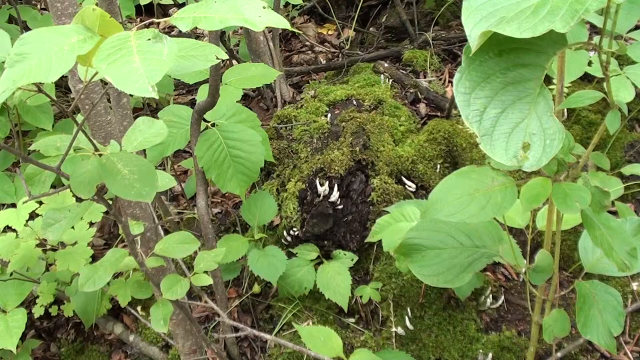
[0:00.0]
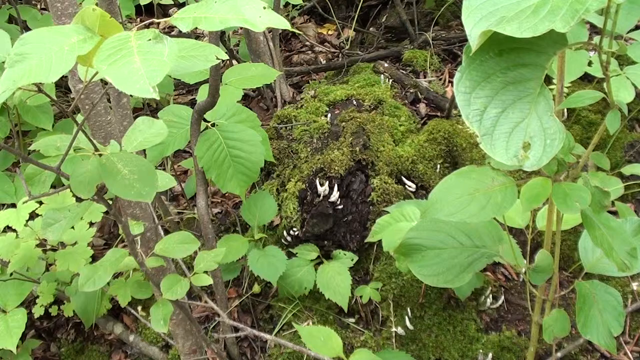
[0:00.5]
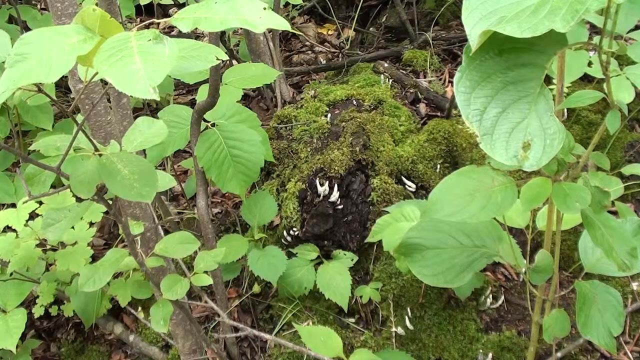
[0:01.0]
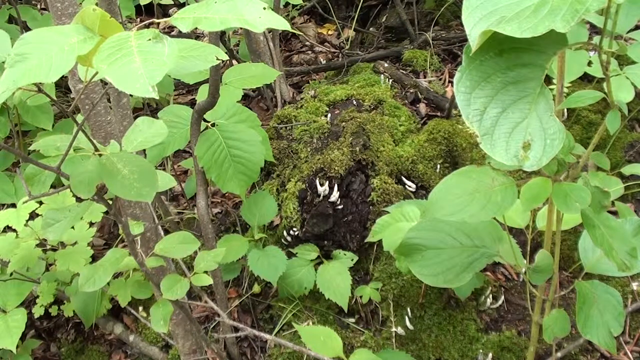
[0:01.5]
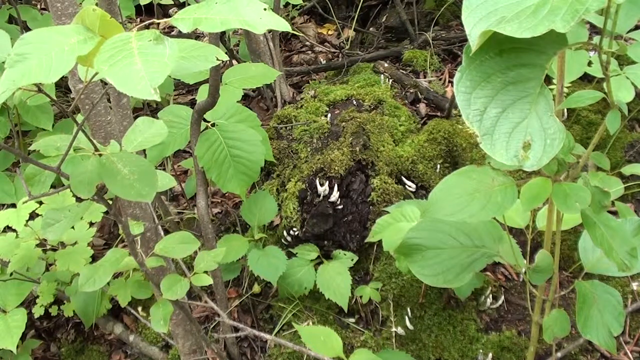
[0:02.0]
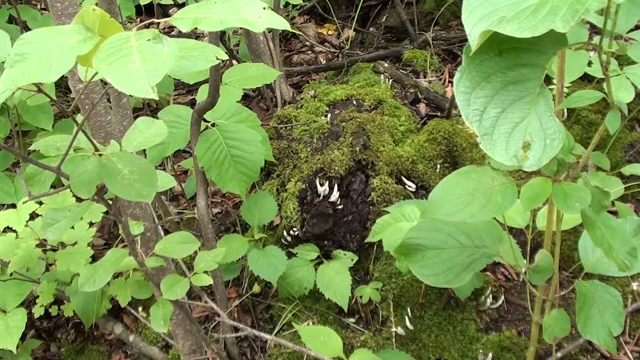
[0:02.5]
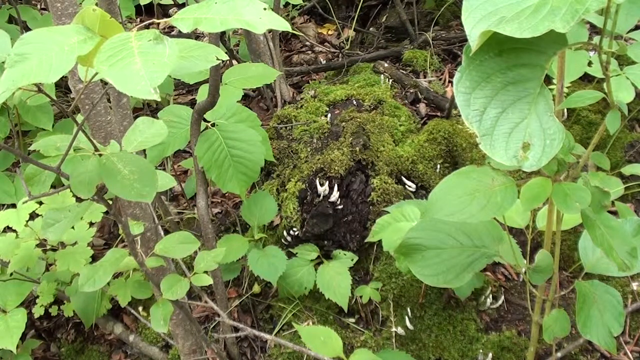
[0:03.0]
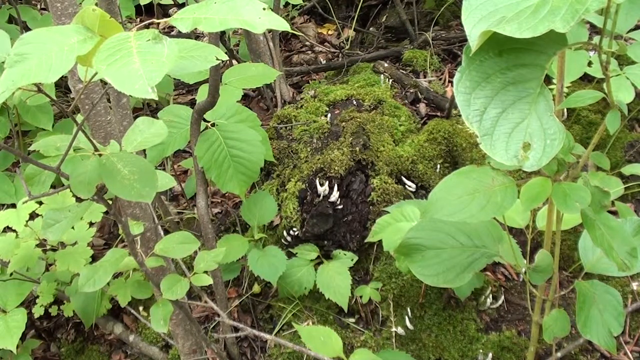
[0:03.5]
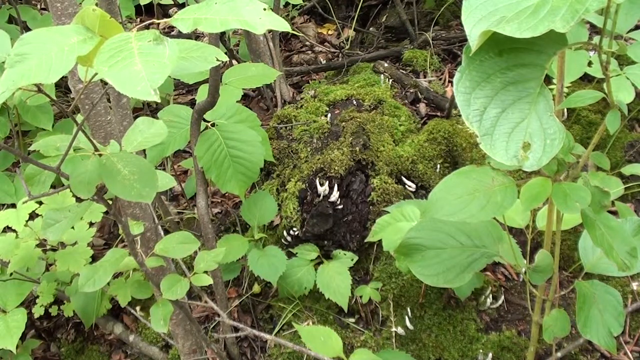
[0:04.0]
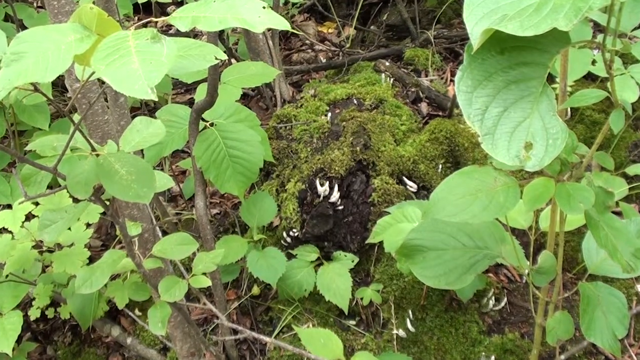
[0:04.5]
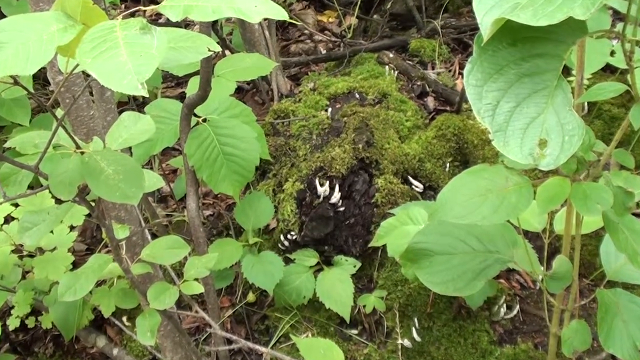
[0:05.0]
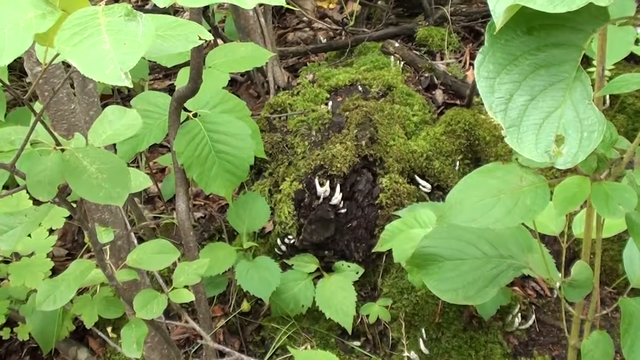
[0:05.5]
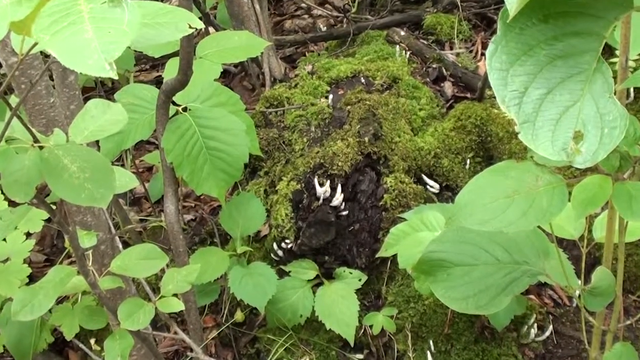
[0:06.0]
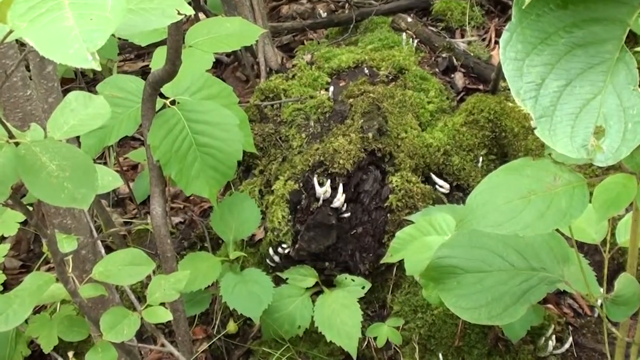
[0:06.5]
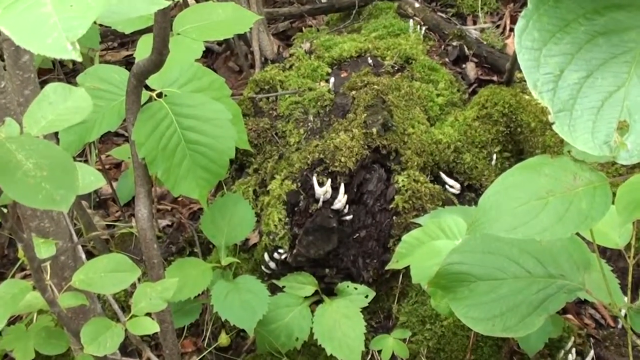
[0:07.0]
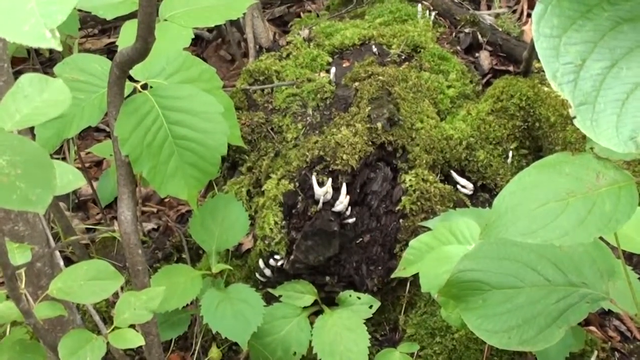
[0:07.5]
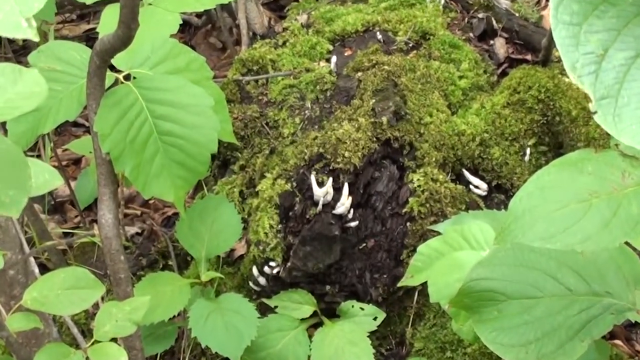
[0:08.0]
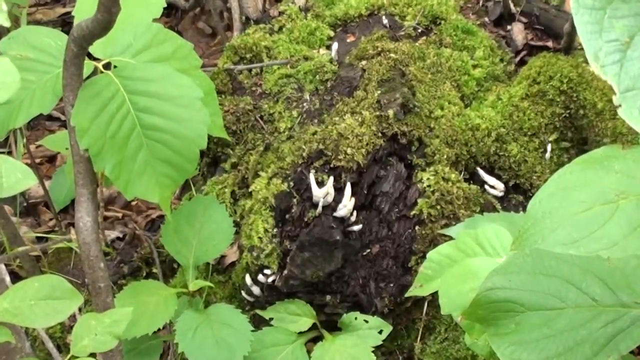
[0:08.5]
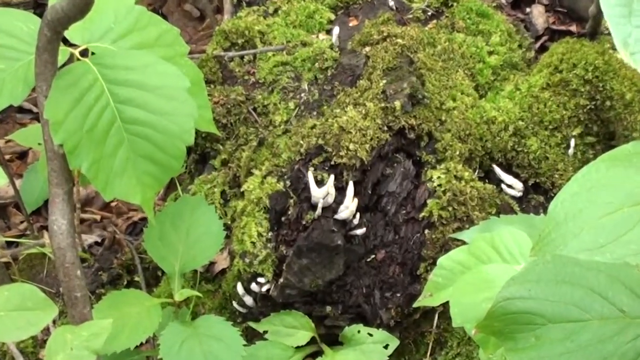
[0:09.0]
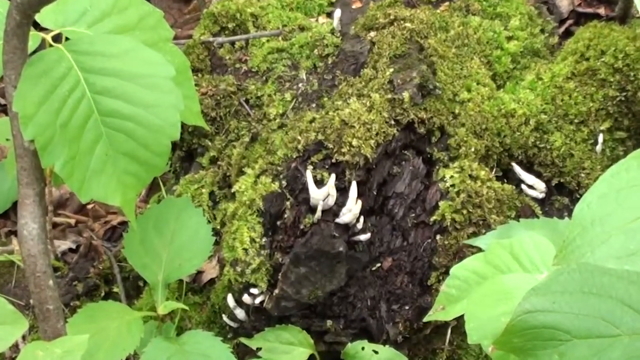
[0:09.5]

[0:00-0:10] The video appears to be recorded in the woods somewhere. Tall, skinny plants with big light green leaves are visible, along with some small trees. There is a mossy-looking area that might be a stump, and growing inside it are small white things that look like either fungus or the beginnings of mushrooms, though they might also be plants. They are small, white and pointy in shape, growing up out of the mossy log. Green moss covers the whole log, and these solid white things stick out of it.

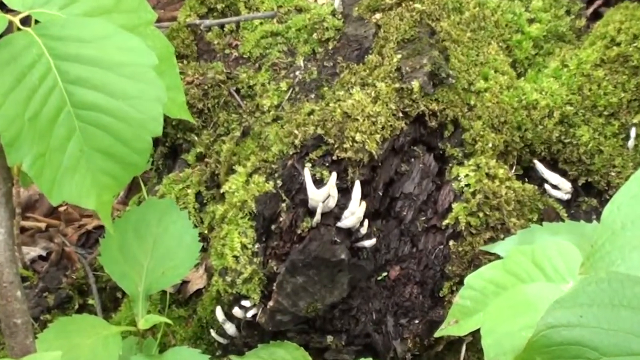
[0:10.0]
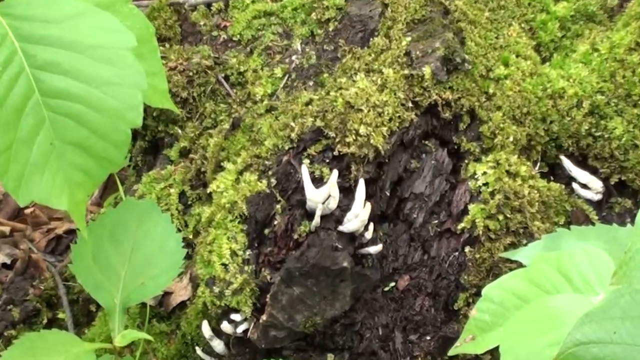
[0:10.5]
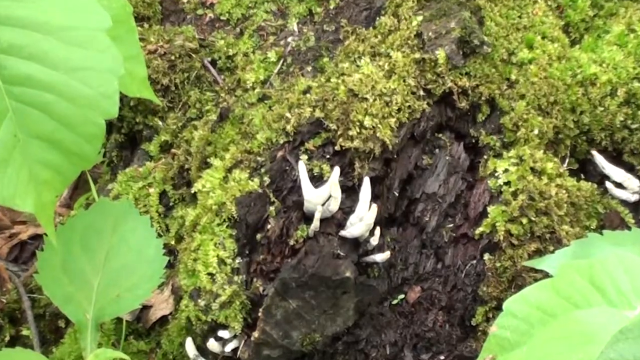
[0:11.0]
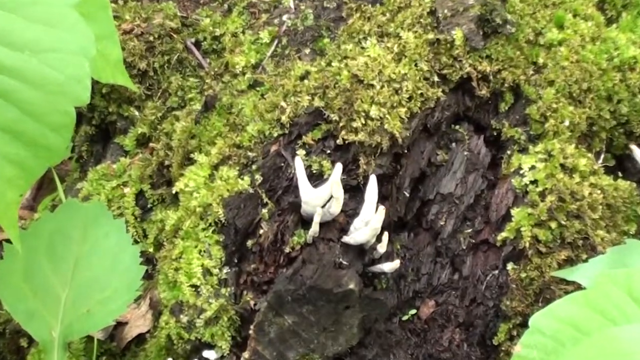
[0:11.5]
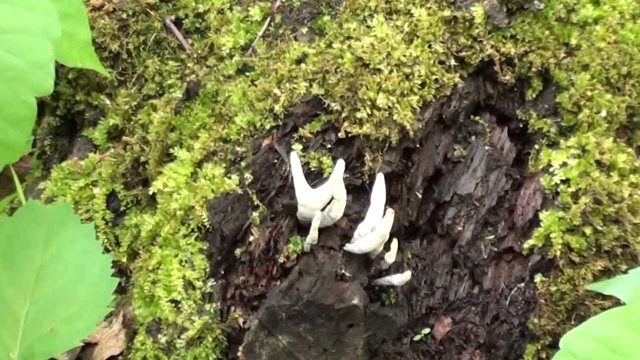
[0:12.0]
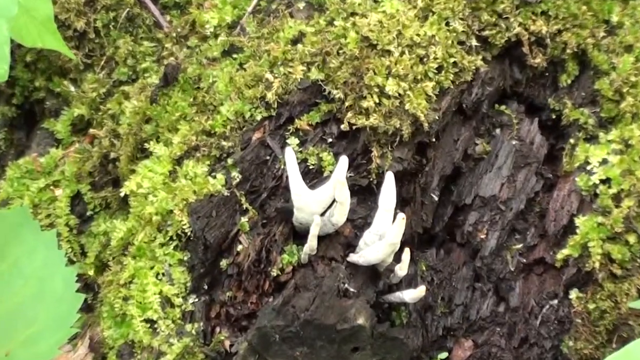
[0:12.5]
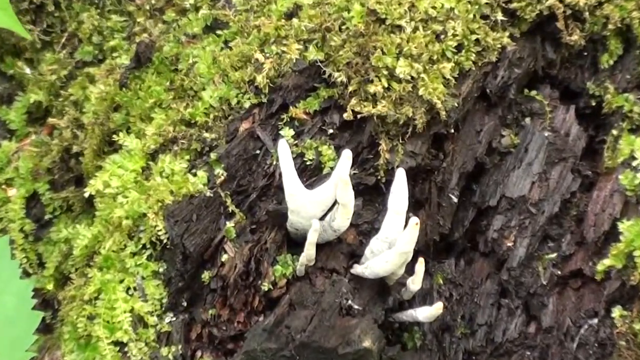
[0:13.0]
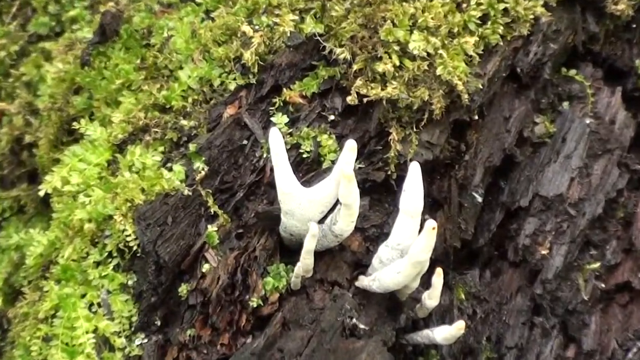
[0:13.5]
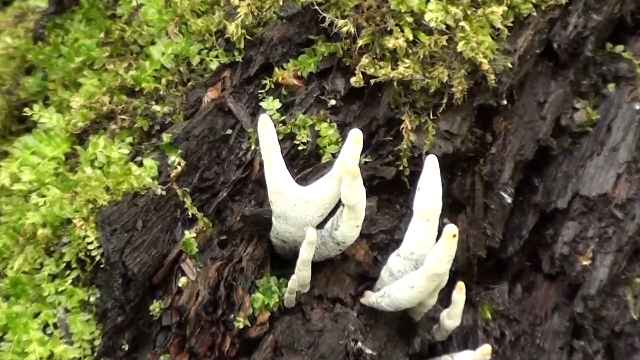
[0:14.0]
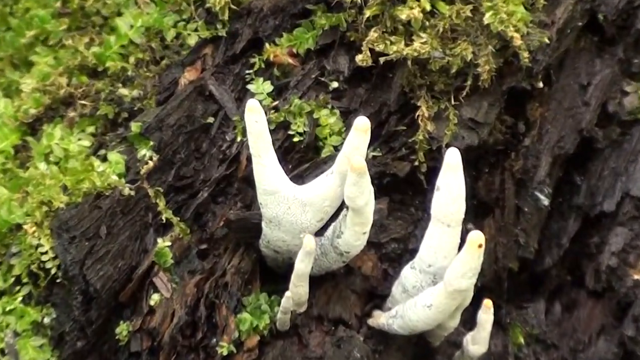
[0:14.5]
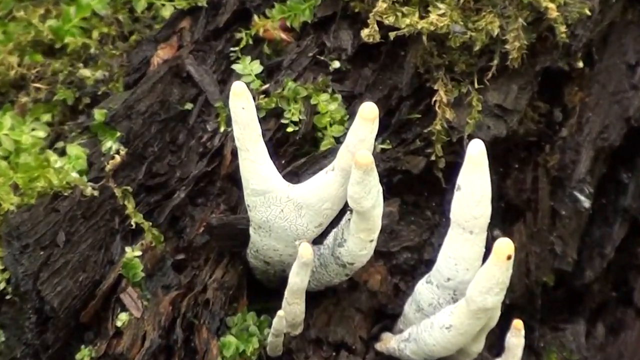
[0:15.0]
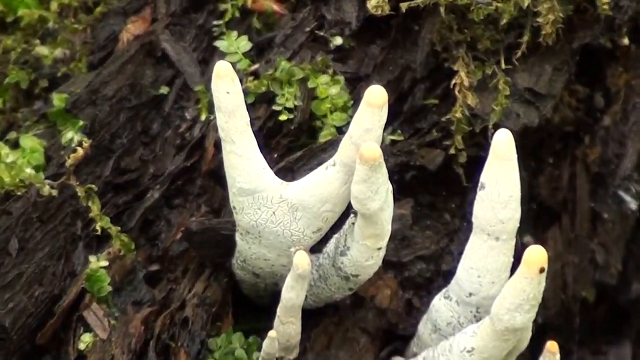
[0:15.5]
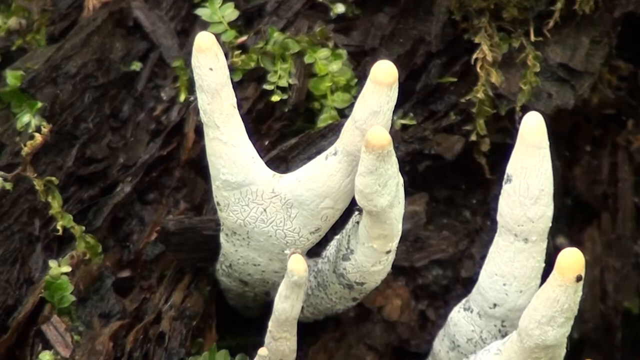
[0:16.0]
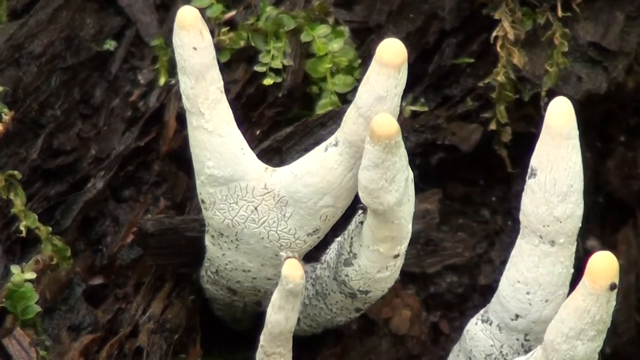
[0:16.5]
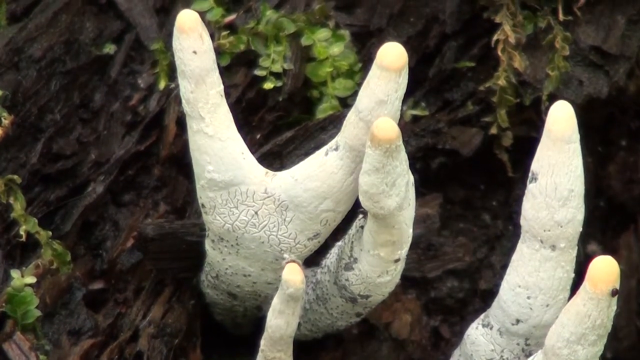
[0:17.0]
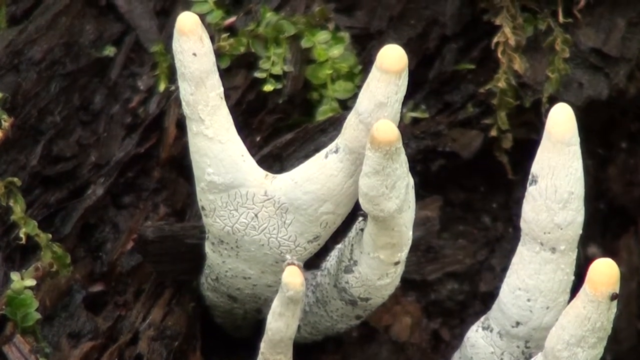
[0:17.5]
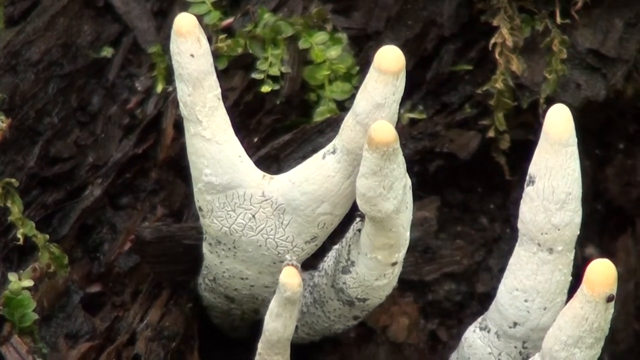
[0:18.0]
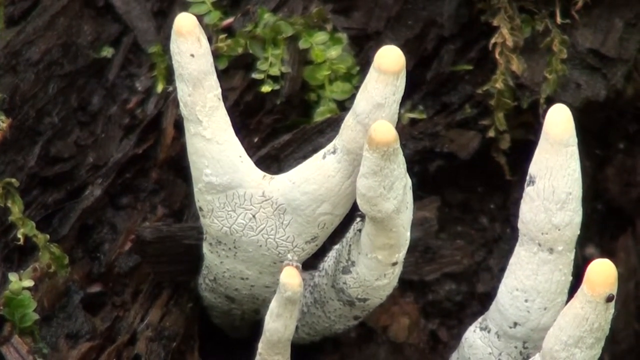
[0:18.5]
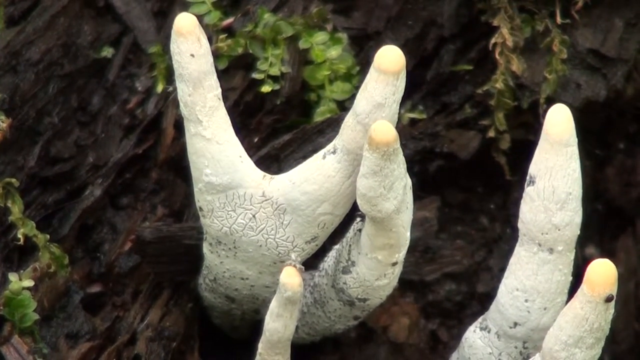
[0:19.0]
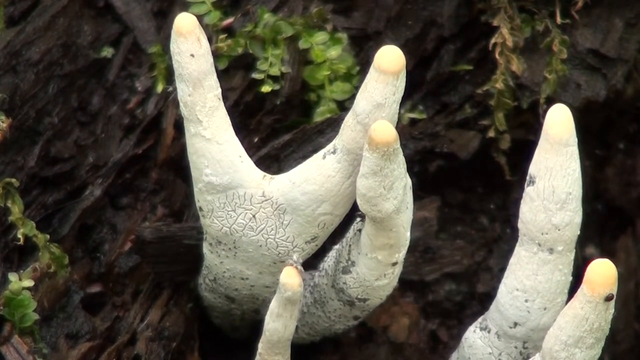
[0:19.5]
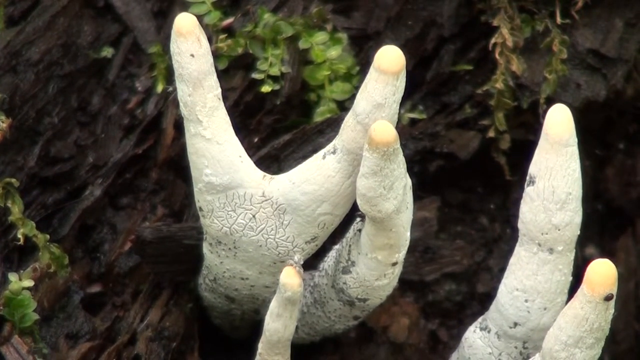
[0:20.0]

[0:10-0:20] Tall, skinny plants with big light green leaves appear on the left and right sides of the screen, and in the middle is a log covered all over in moss. Growing in the middle of the log are white things that might be fungus or some type of mushroom. The camera slowly zooms in, and they look like white fingers growing up out of the log. Off to the right are two more of them that look like two white fingers growing out of the log.